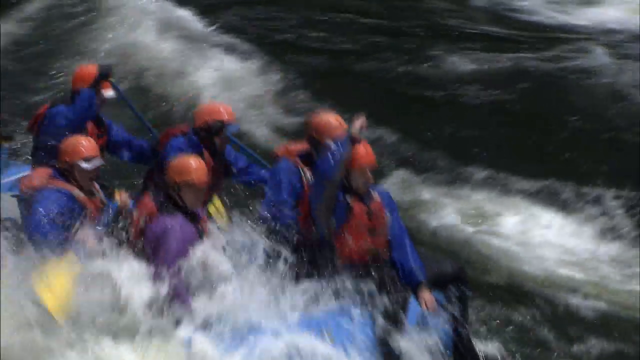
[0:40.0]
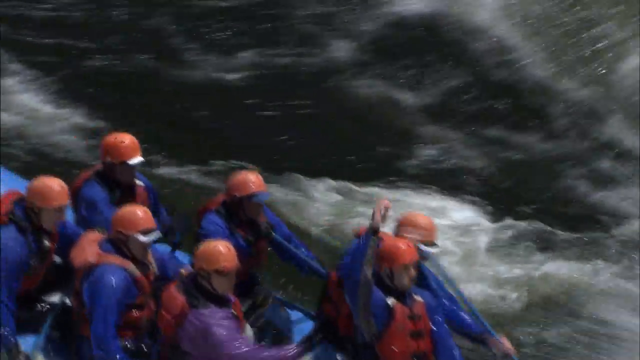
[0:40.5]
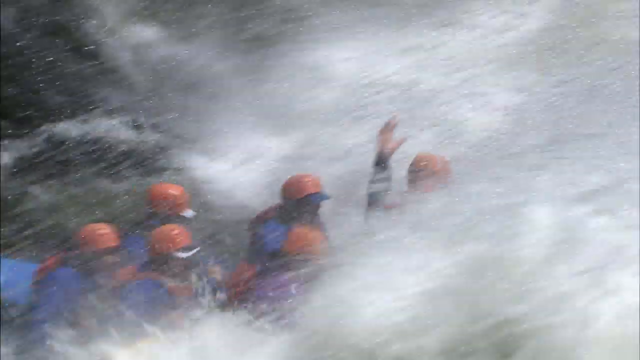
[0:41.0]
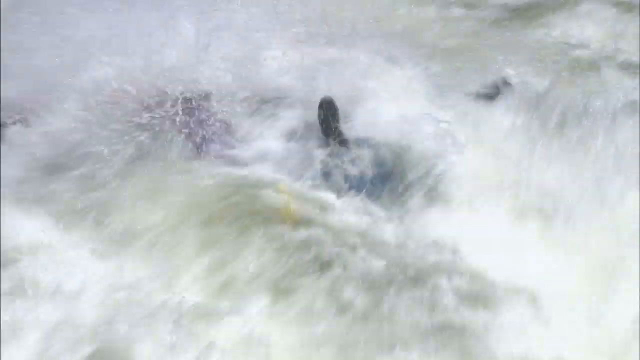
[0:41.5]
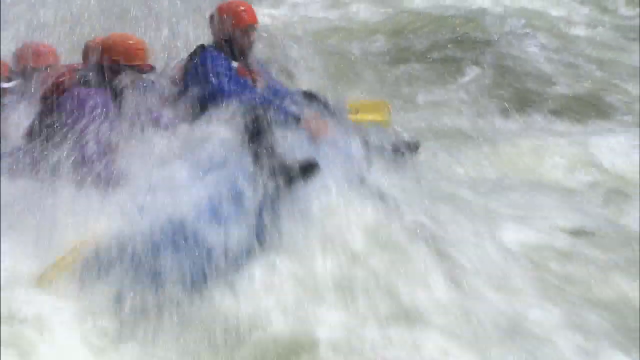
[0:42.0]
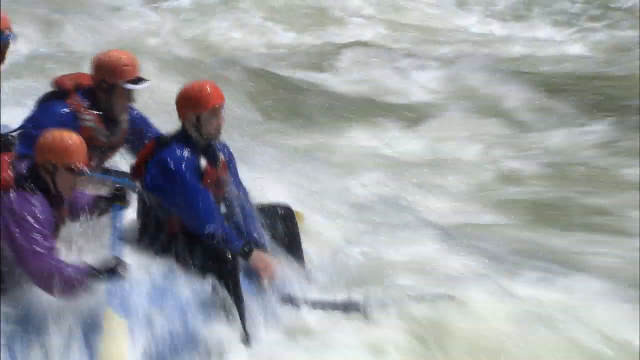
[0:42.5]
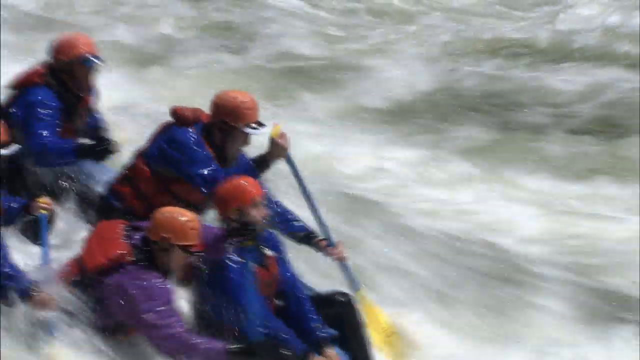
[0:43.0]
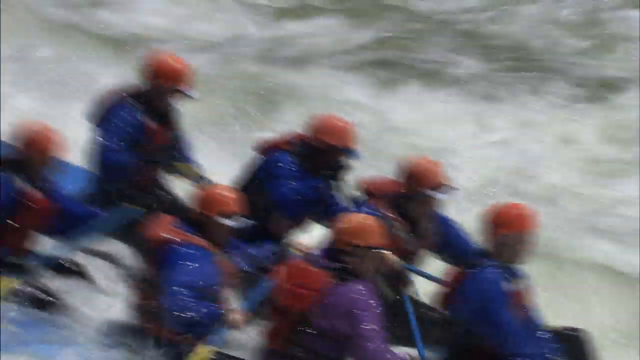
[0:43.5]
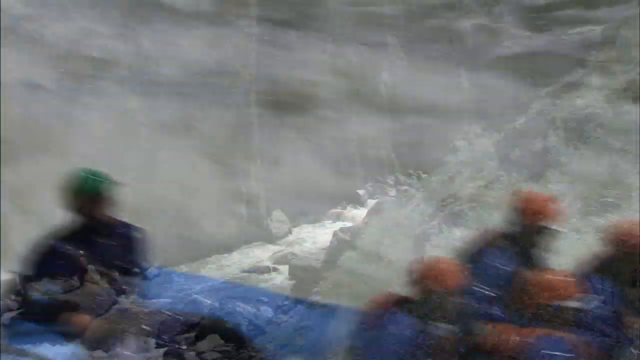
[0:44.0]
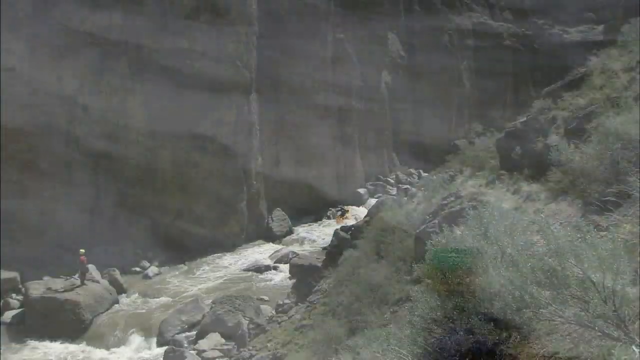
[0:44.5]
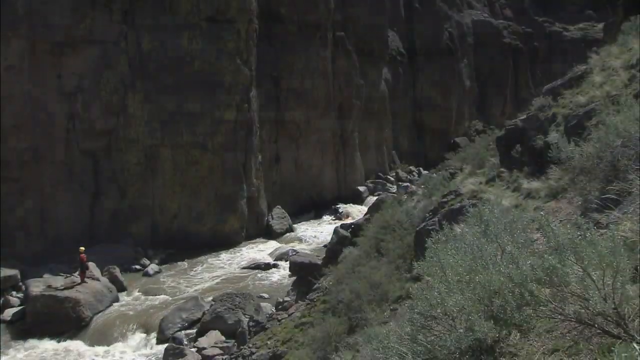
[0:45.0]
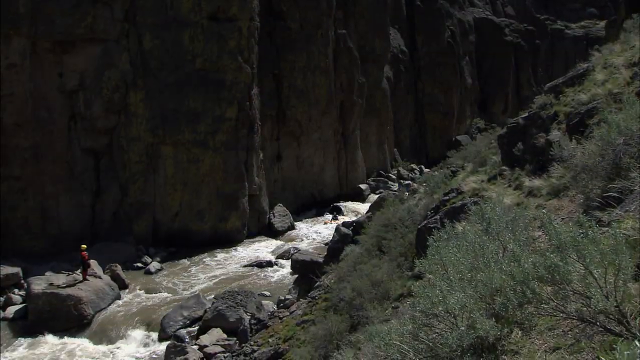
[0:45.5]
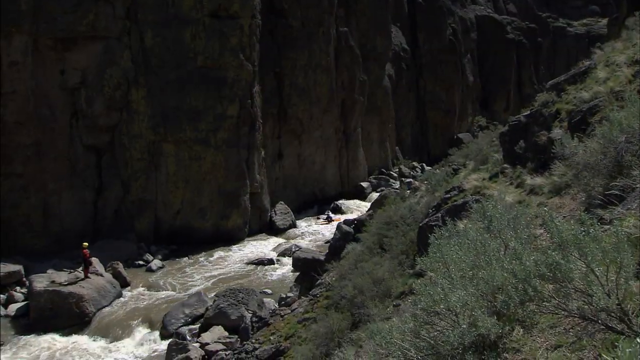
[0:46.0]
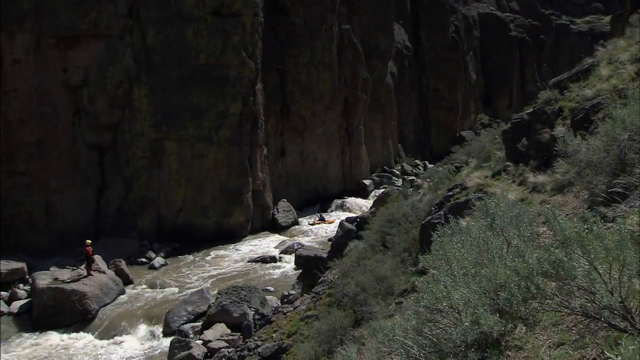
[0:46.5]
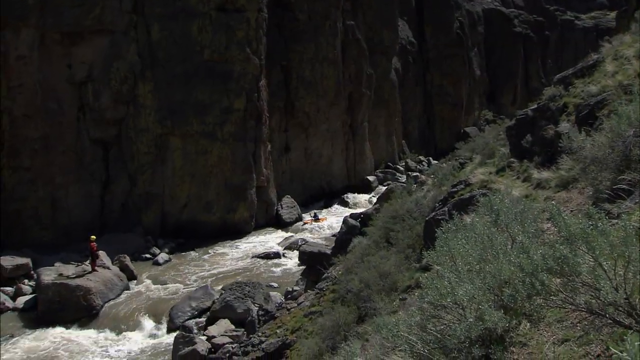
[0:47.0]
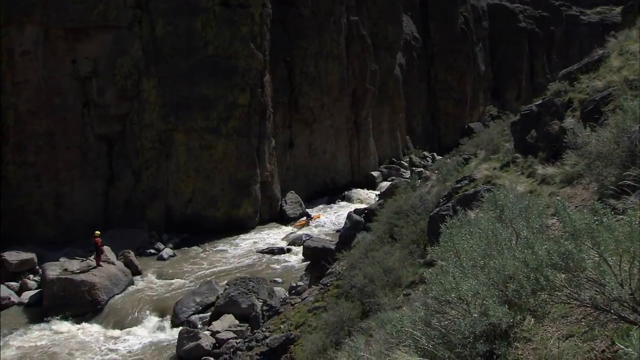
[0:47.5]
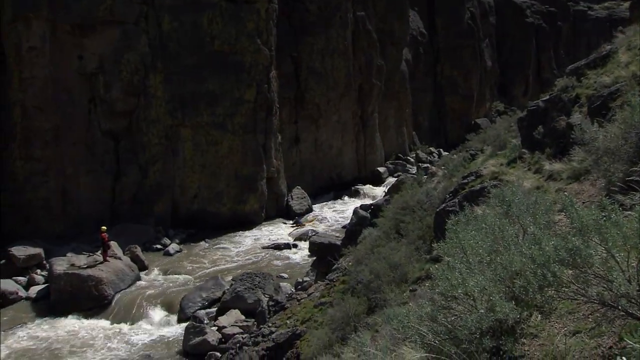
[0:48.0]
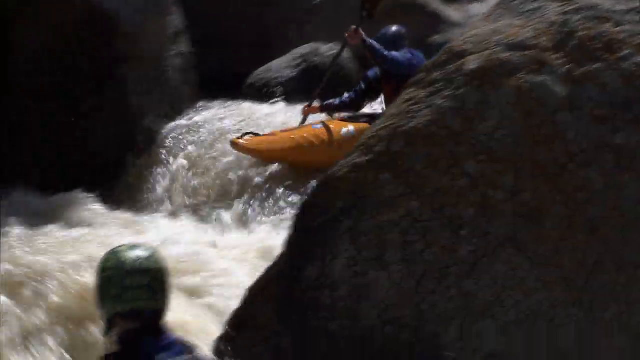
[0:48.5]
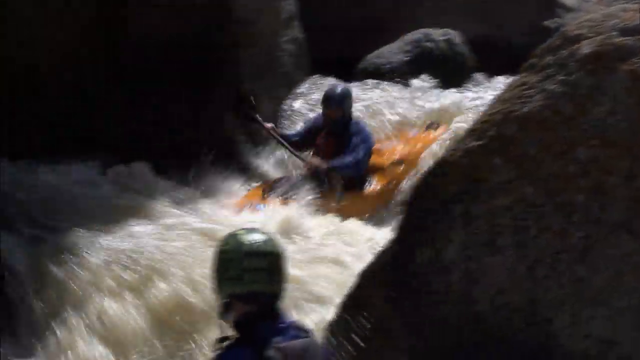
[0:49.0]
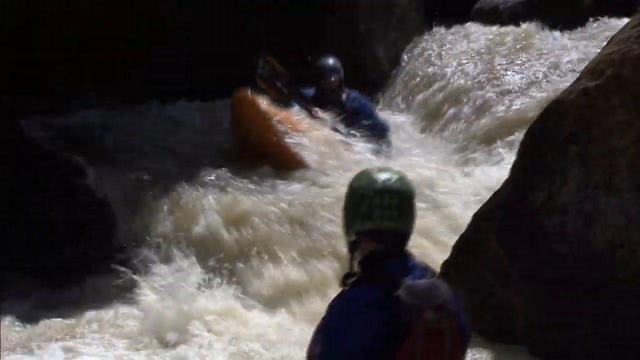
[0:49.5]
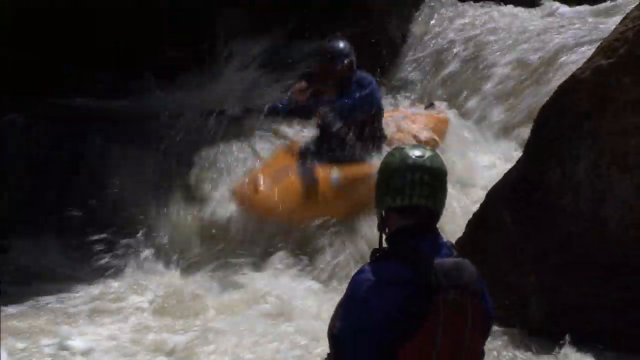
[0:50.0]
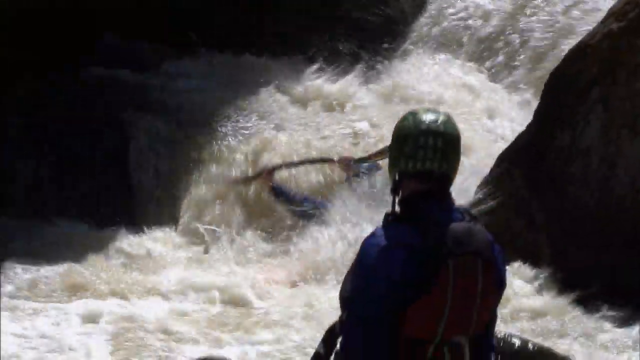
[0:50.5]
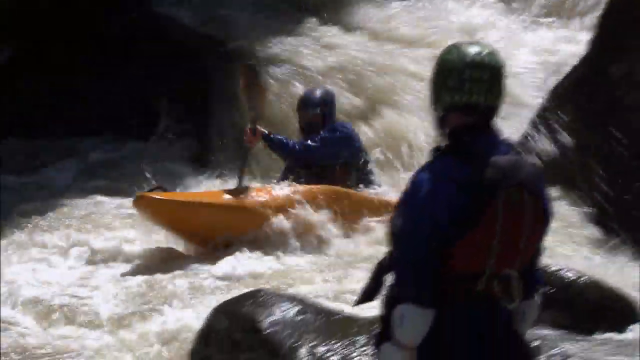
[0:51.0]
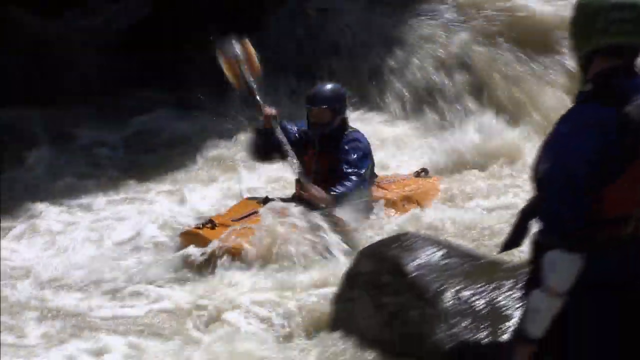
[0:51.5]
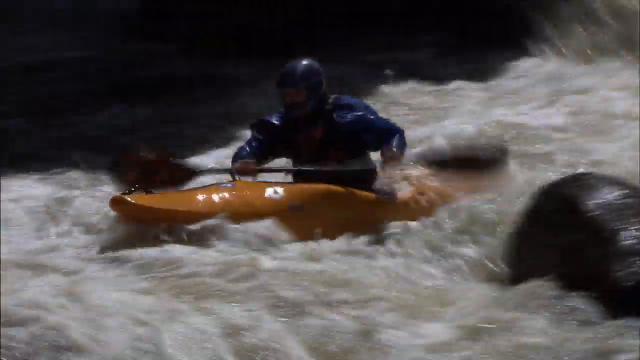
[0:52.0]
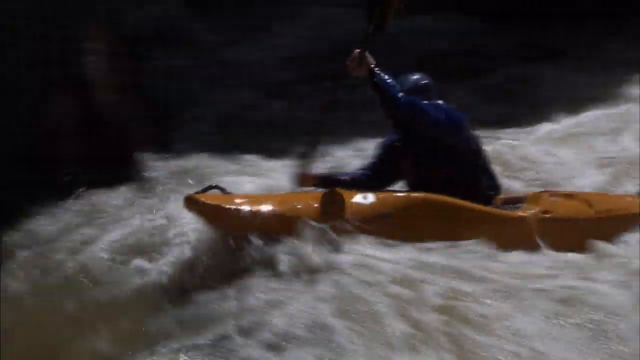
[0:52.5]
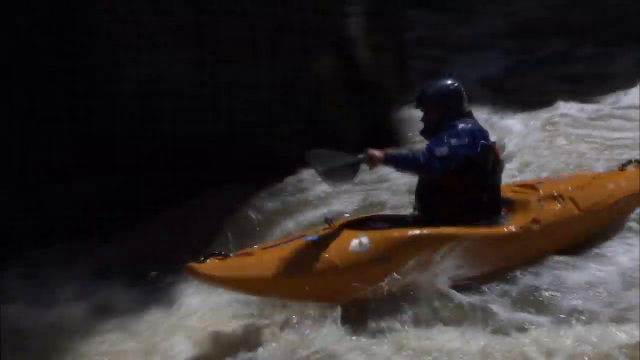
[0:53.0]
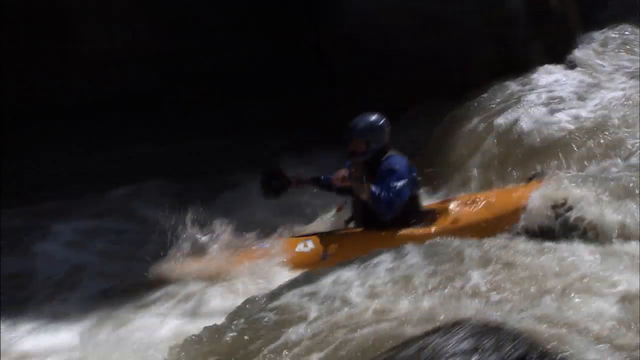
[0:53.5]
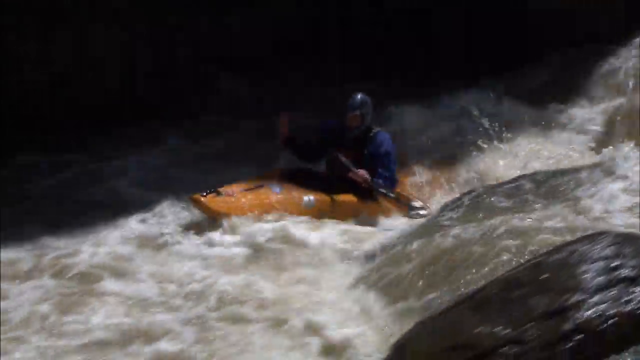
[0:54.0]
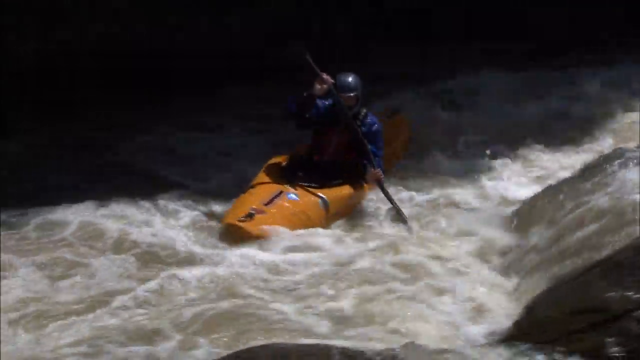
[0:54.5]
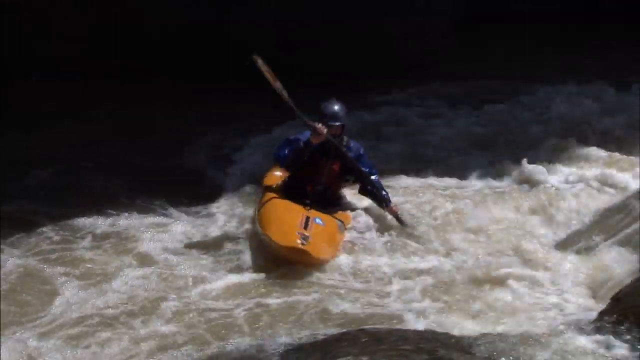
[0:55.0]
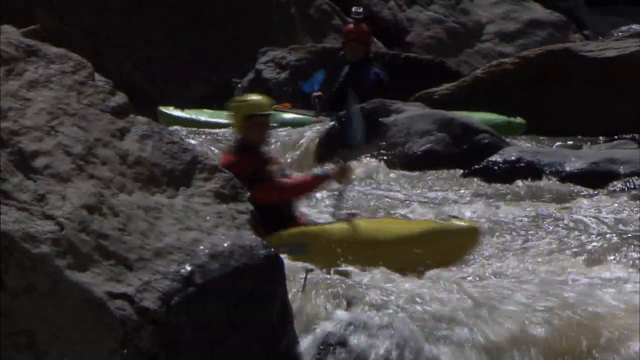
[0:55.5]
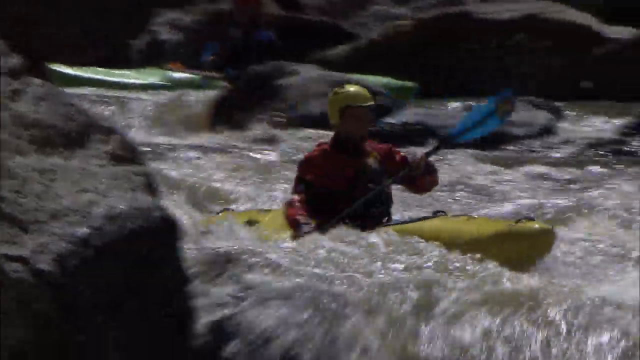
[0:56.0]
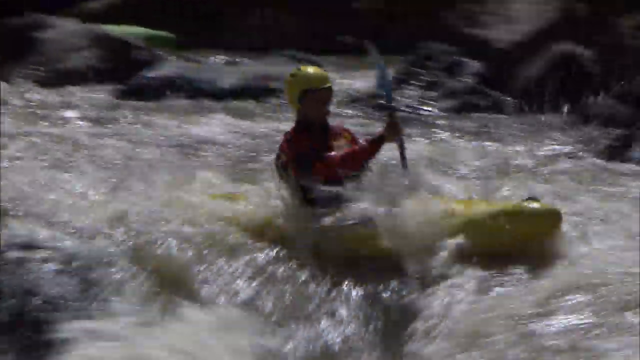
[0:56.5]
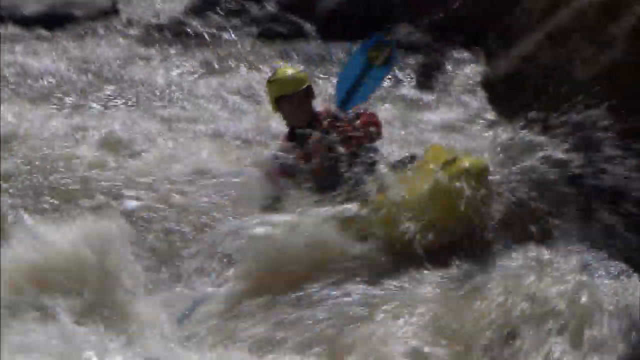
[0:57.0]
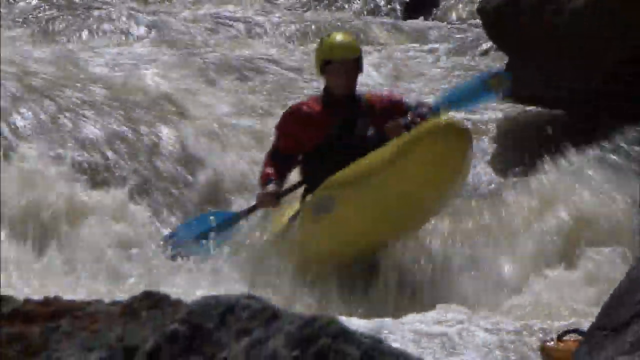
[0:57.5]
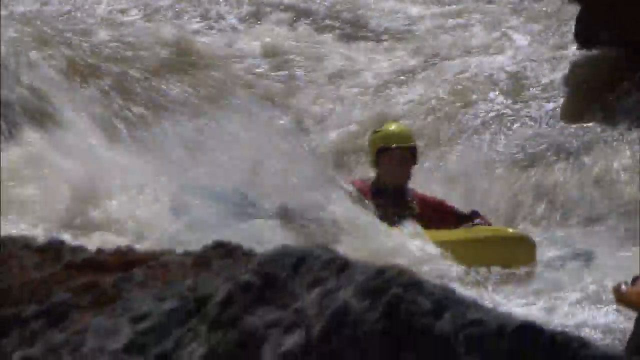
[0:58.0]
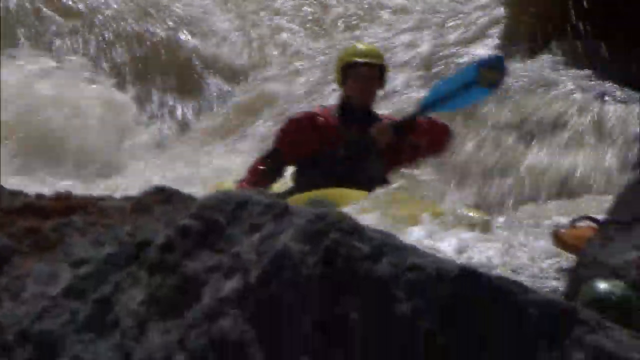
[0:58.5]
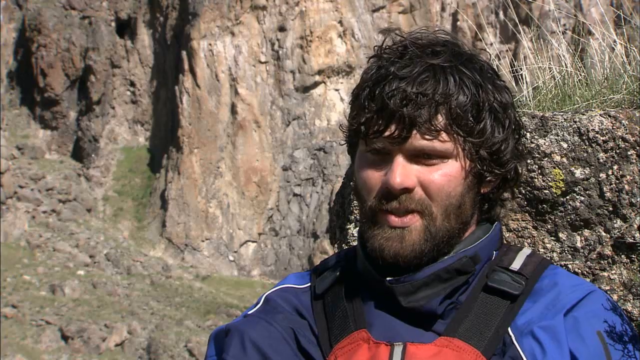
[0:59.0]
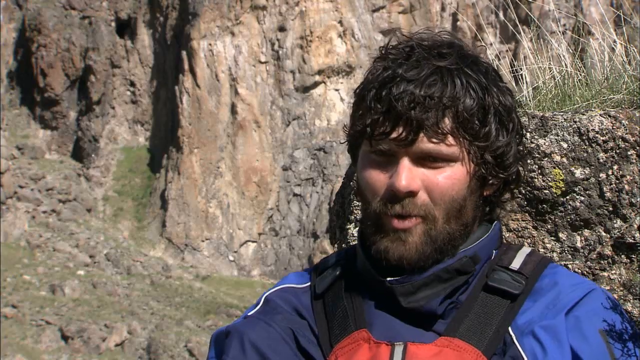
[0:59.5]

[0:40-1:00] Two kayaks carrying several people in blue jackets try to get through a large crashing wave that goes right through them. The boat goes back downward and they fade off the screen. Next is a running river with lots of rocks; a person stands on a large rock, very far away, toward the bottom left corner of the screen. Someone in an orange kayak comes down part of a waterfall, goes down another small section before reaching the river, and continues to row. Another person does the same in a yellow kayak, wearing a yellow helmet; they row to the left, dodge a corner, and reach ground level. Briefly, a man talks with the side of a mountain behind him; he has black hair and appears to be middle-aged.